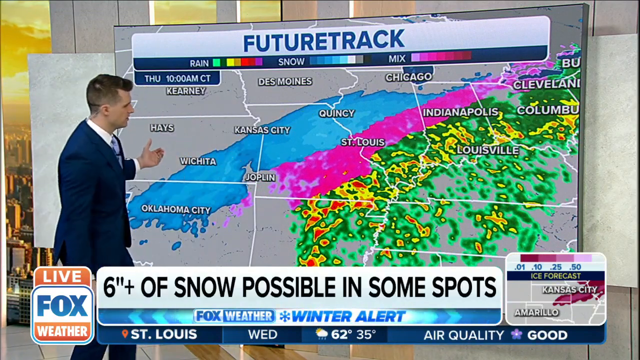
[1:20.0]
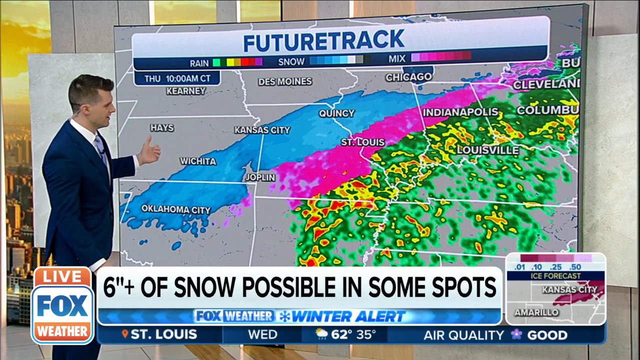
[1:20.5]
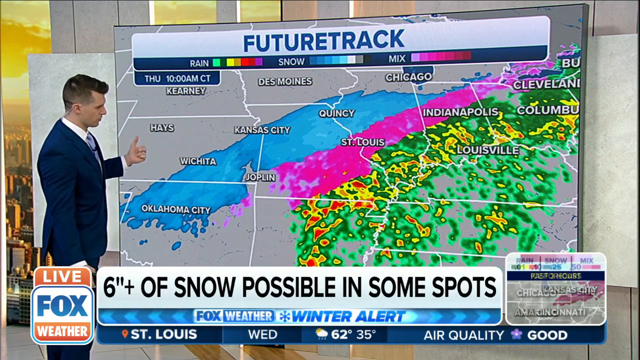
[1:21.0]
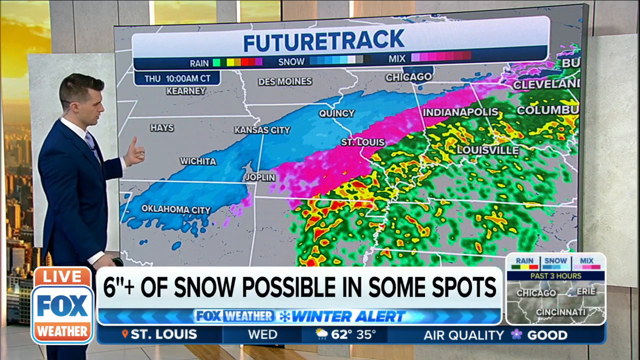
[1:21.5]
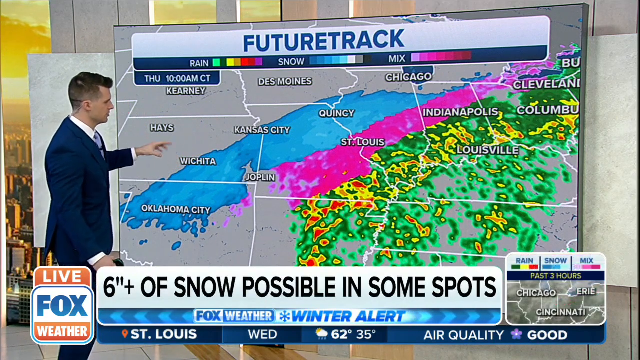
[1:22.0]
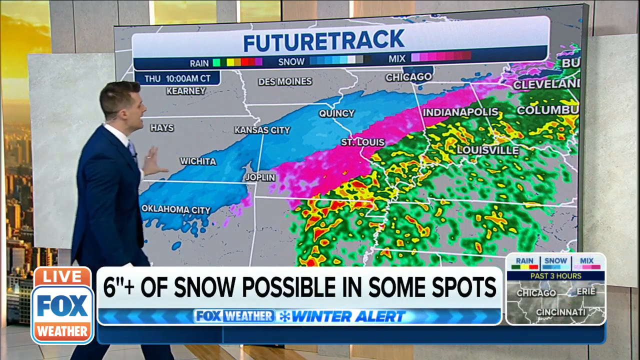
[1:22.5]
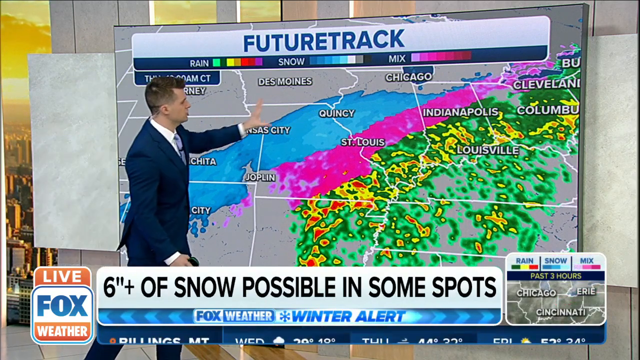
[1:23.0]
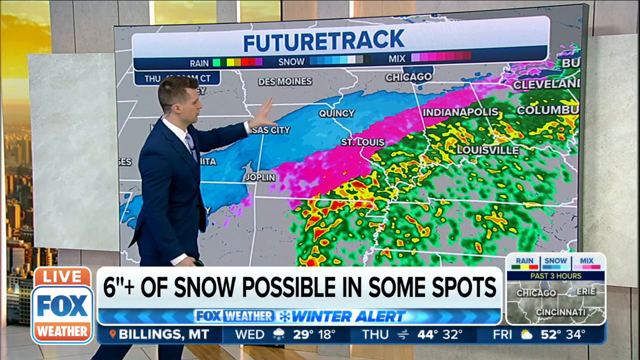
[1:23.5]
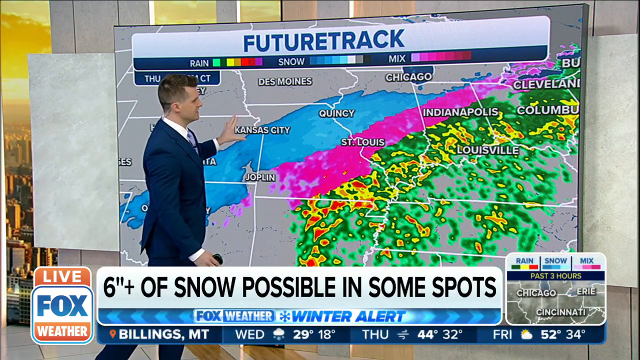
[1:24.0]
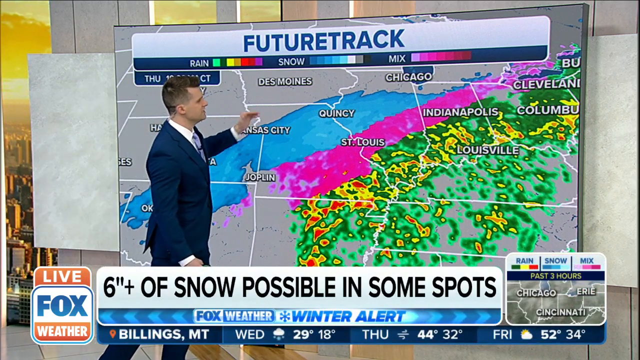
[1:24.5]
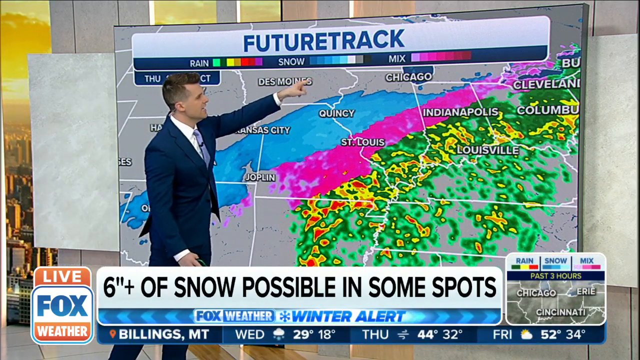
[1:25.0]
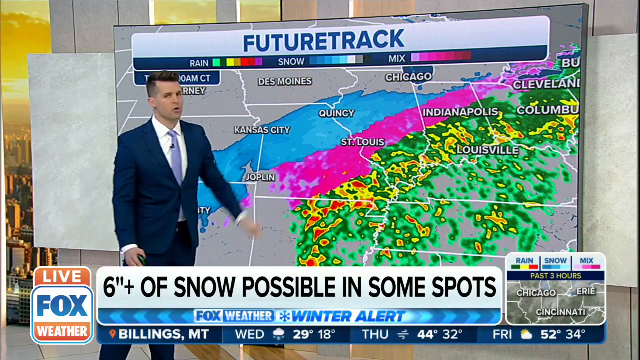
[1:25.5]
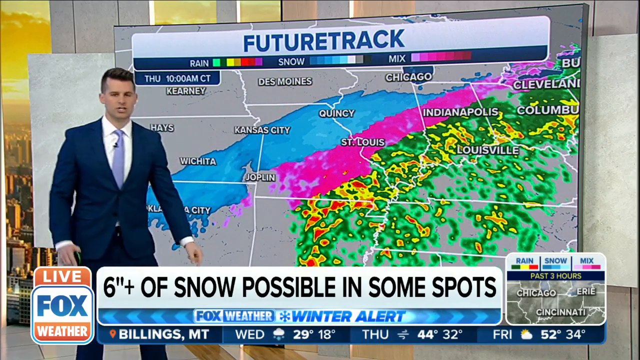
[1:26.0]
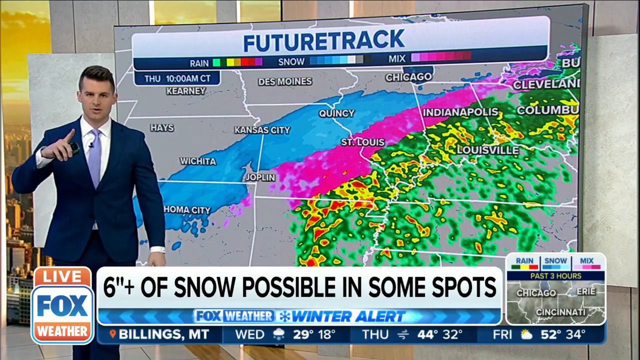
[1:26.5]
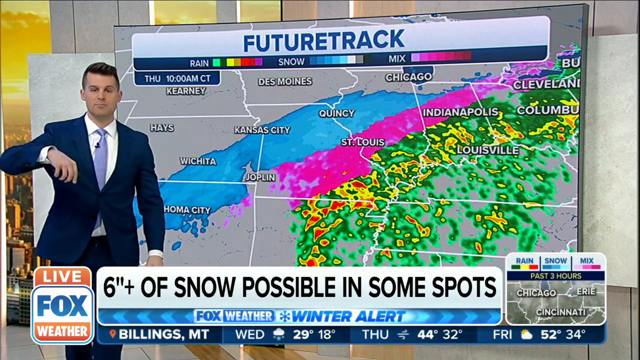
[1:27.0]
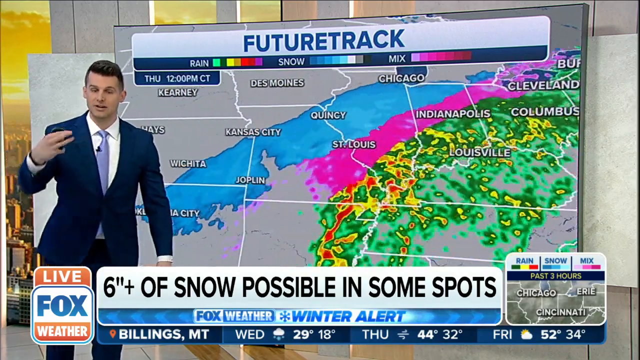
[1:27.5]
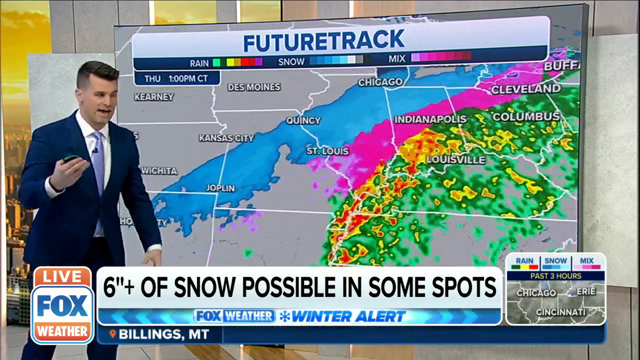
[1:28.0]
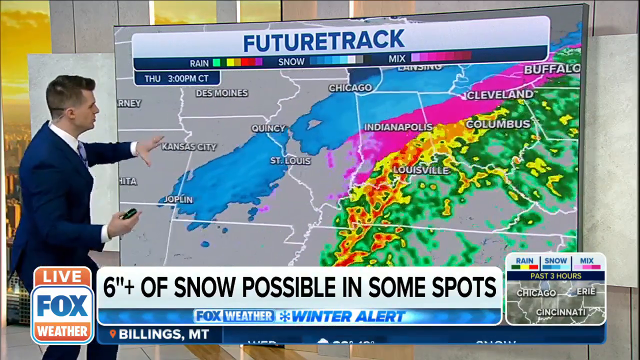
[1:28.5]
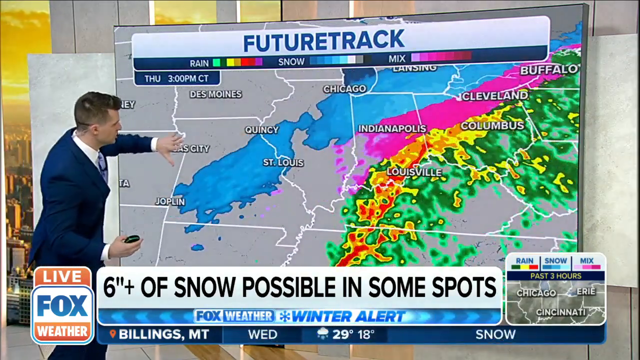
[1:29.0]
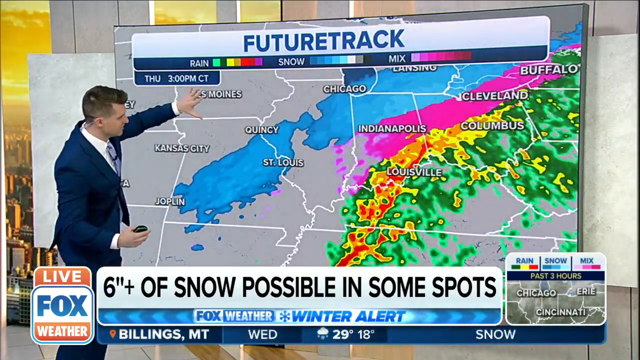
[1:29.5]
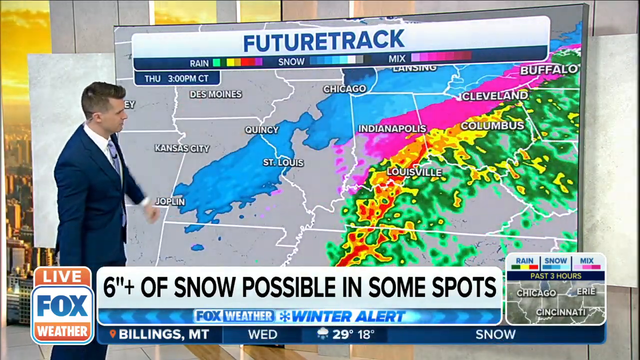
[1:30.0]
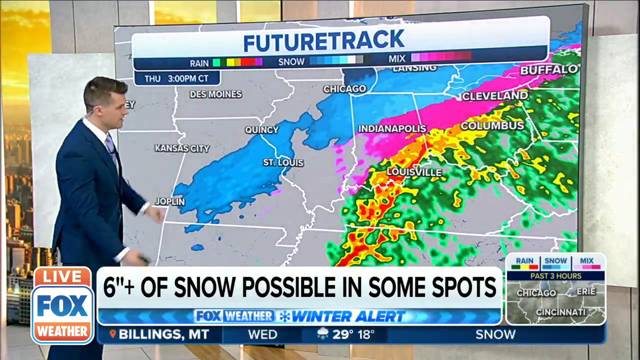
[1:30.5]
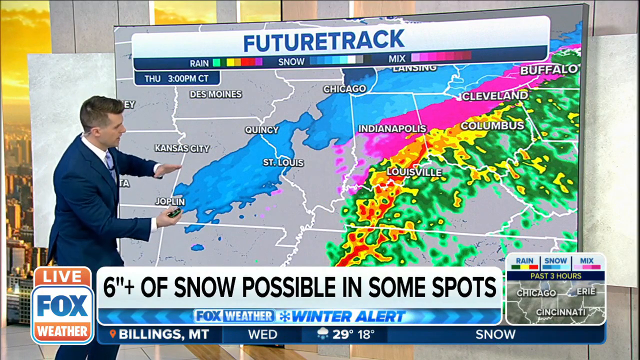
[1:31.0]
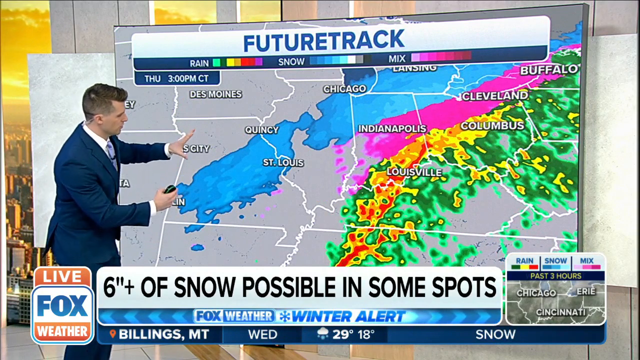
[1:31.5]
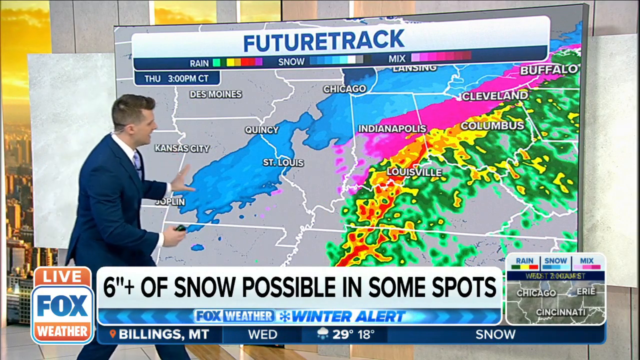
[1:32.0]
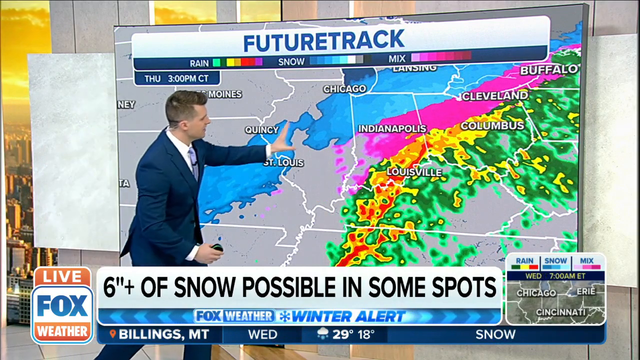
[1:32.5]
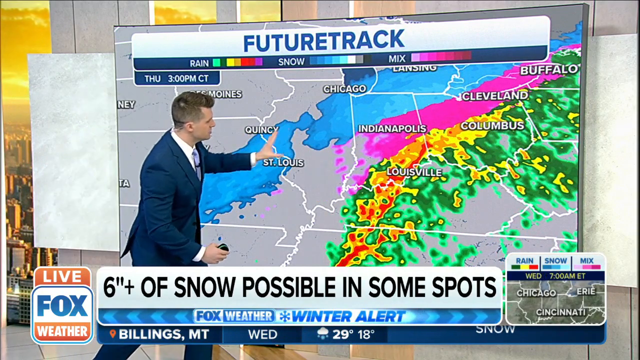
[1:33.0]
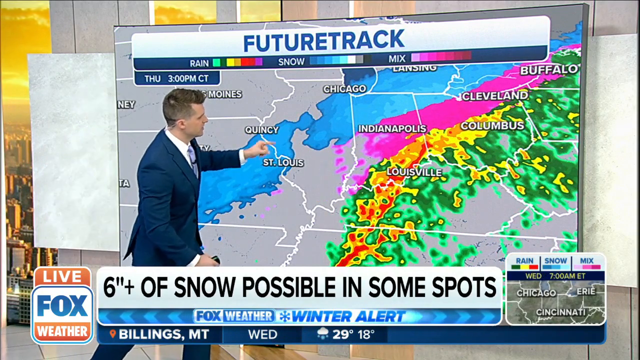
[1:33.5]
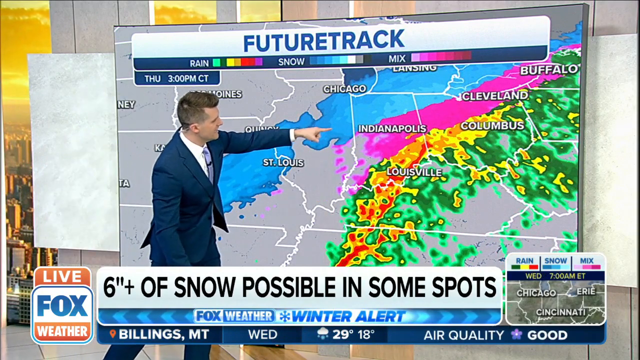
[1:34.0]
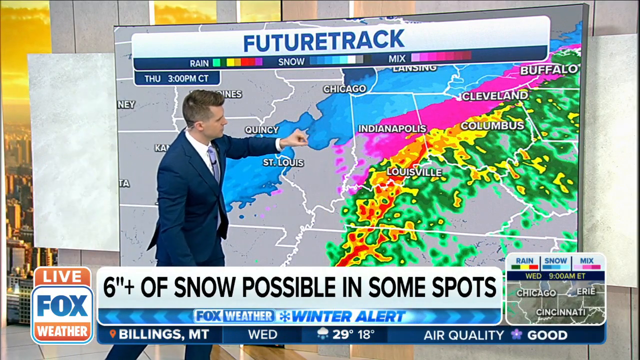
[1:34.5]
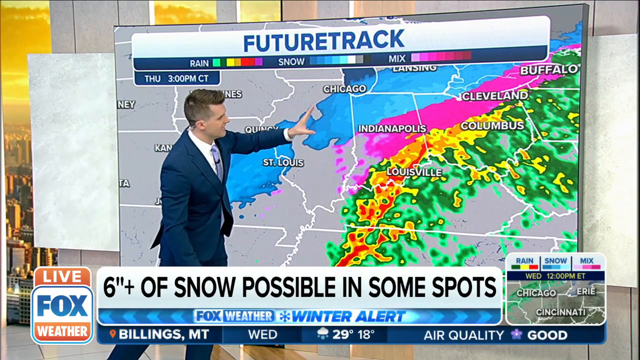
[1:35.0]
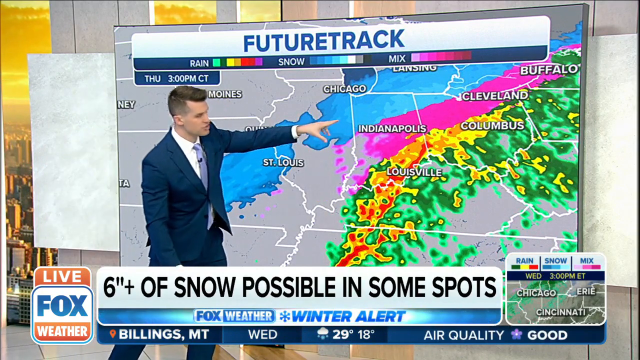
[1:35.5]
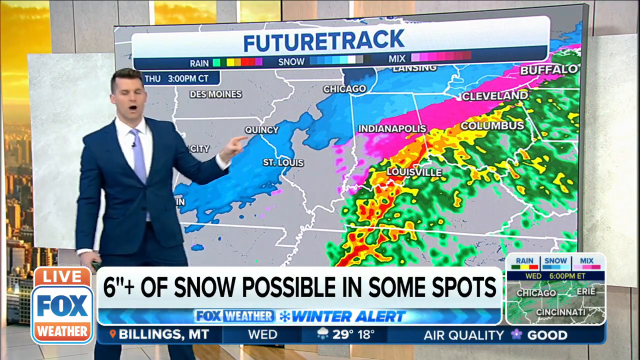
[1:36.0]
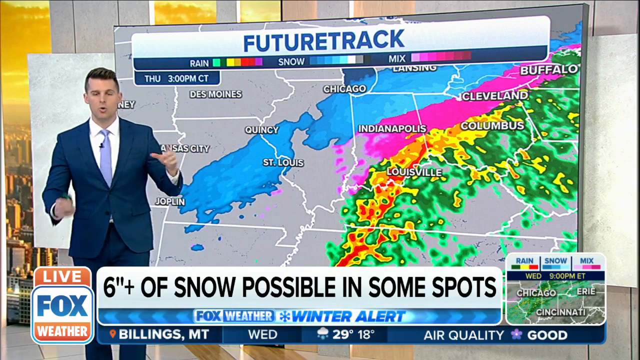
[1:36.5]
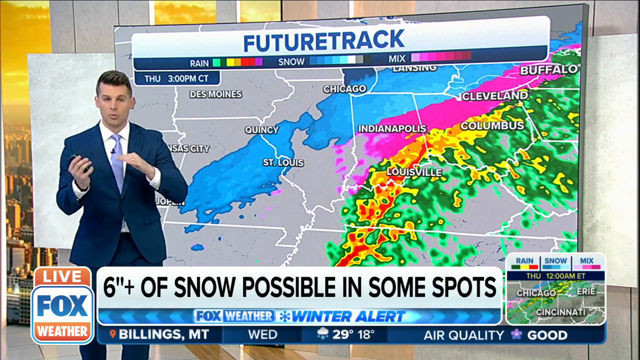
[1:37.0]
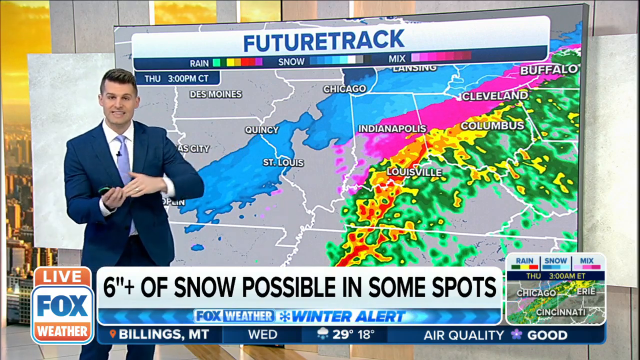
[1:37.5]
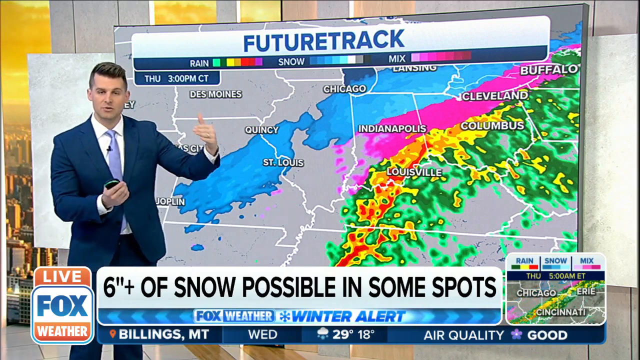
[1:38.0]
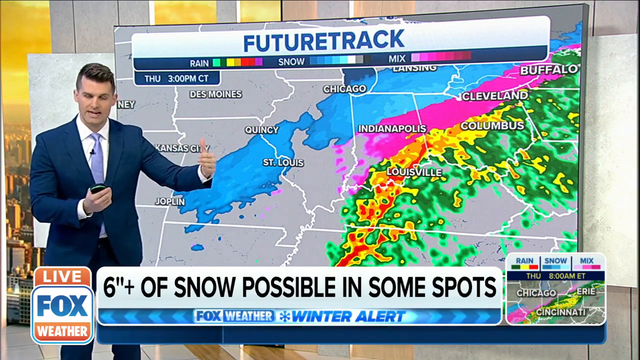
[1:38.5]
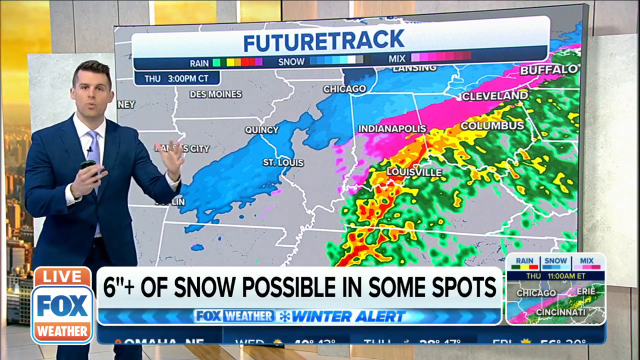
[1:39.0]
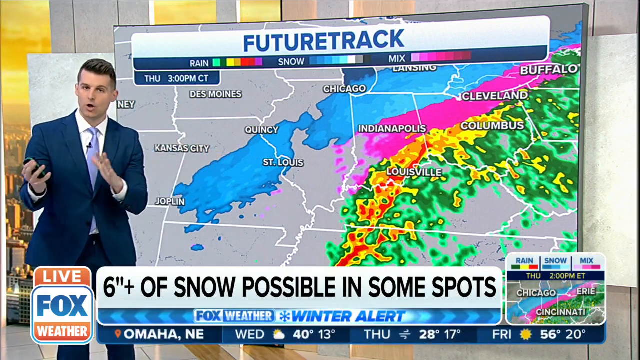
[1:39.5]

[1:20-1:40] The meteorologist stands in front of the board, pointing out the path of the ice and snow. Text reads "six inches of snow possible in some spots." He points over Missouri toward Indiana at a giant blue line where most of the snow is possible, especially around places such as St. Louis and Chicago. Other areas of the map show Indiana with a snow mixture and ice, with most of the ice in and east of Indianapolis. The line extends through Cleveland, Ohio, and into Buffalo, New York. Southeast of it there is a lot of rain, especially around Louisville, Kentucky, and Columbus, Ohio, and south into Tennessee. Most of the snow and ice covers Missouri, Indiana, Ohio, and small parts of Michigan and New York. Throughout, he moves his hands, particularly around the top of Missouri, as the storm passes through the middle of Indiana and the top half of Ohio, pushing further into the far northeast of the country and potentially into Canada.